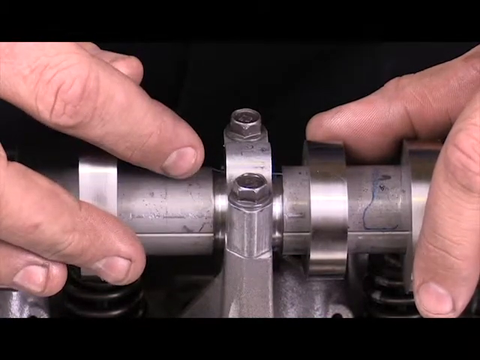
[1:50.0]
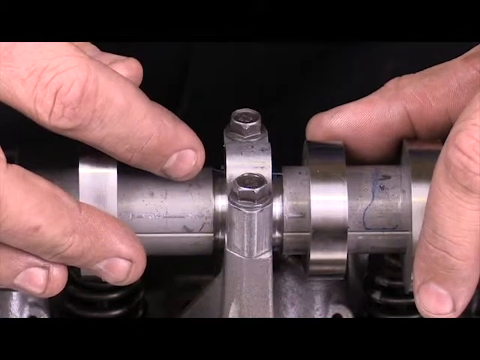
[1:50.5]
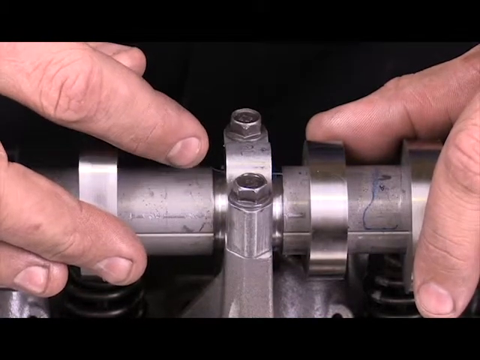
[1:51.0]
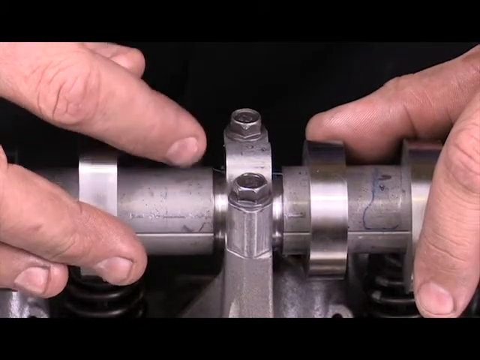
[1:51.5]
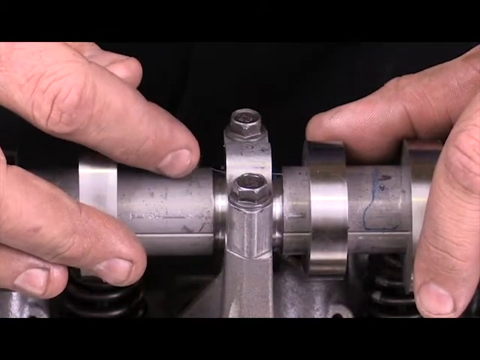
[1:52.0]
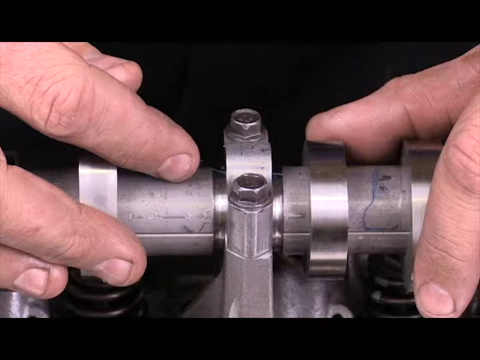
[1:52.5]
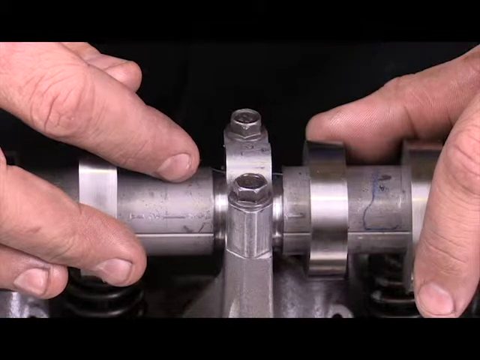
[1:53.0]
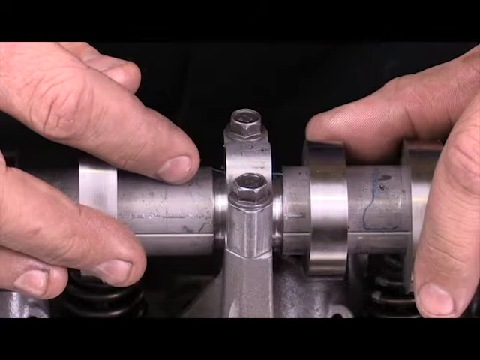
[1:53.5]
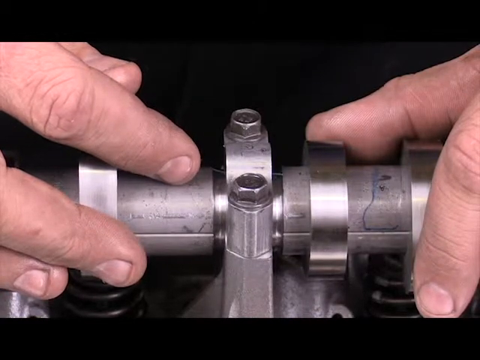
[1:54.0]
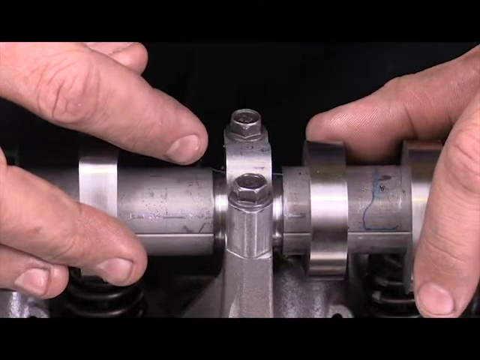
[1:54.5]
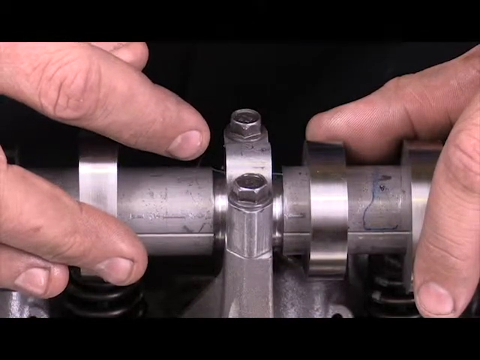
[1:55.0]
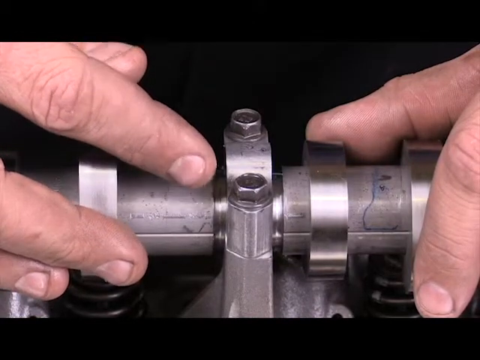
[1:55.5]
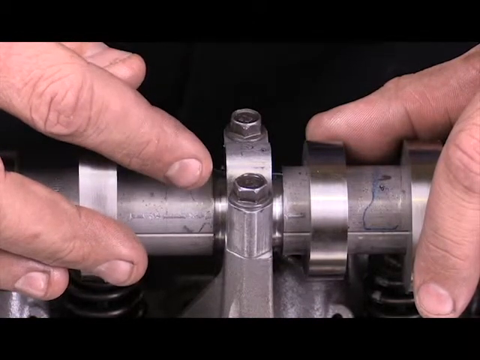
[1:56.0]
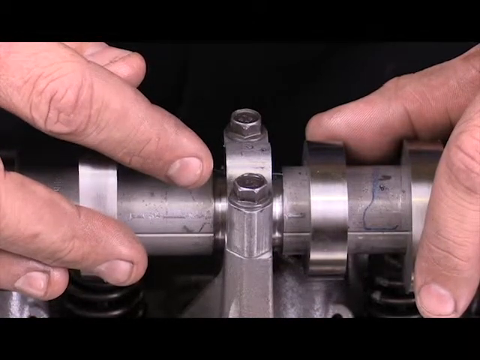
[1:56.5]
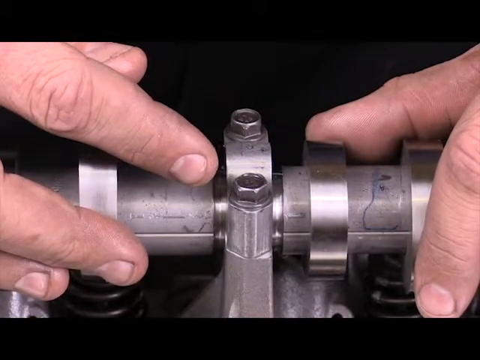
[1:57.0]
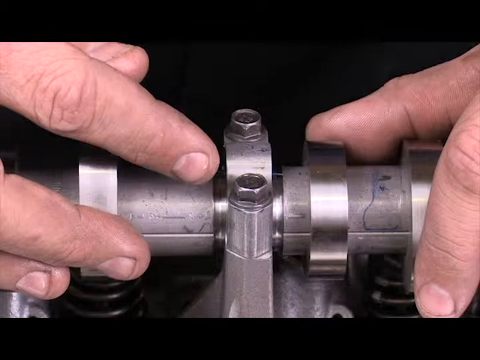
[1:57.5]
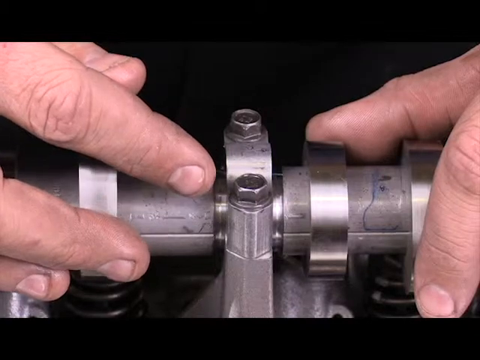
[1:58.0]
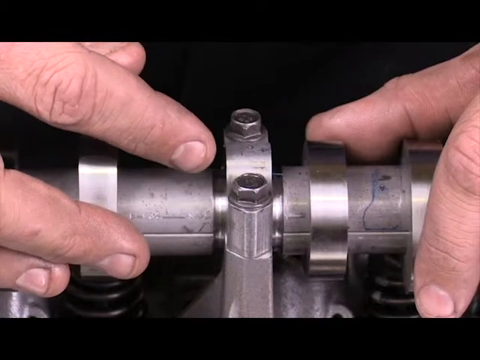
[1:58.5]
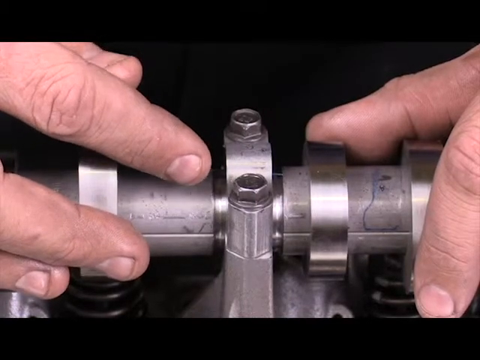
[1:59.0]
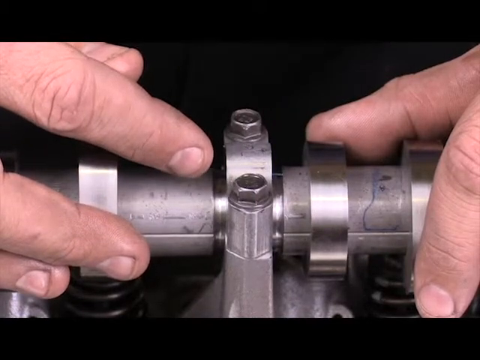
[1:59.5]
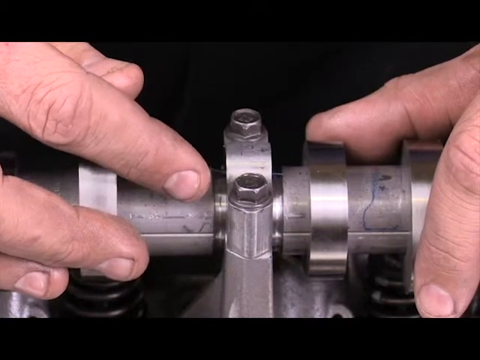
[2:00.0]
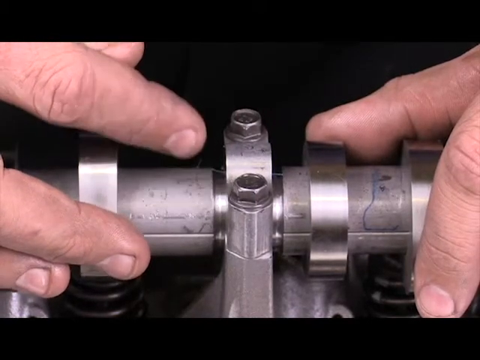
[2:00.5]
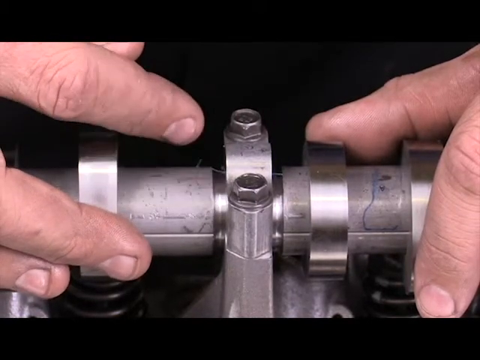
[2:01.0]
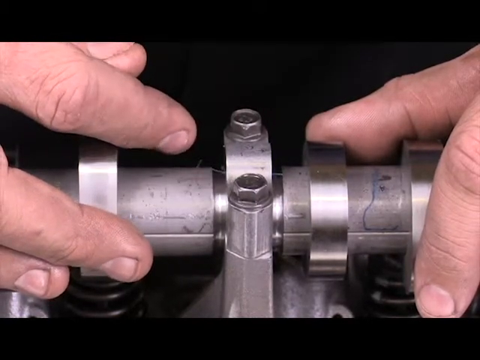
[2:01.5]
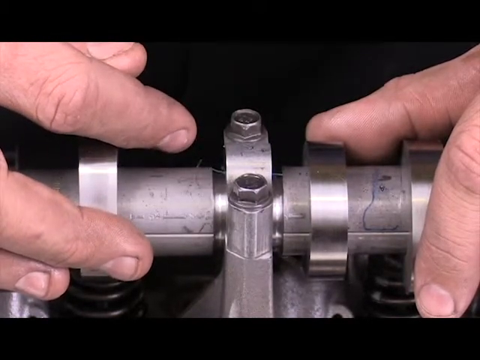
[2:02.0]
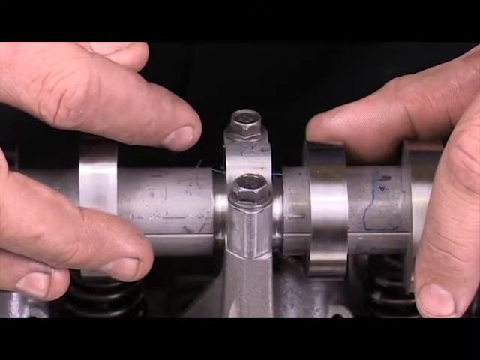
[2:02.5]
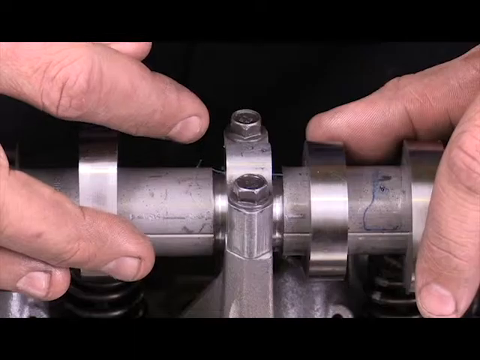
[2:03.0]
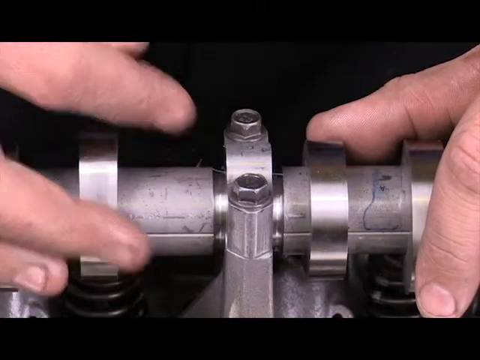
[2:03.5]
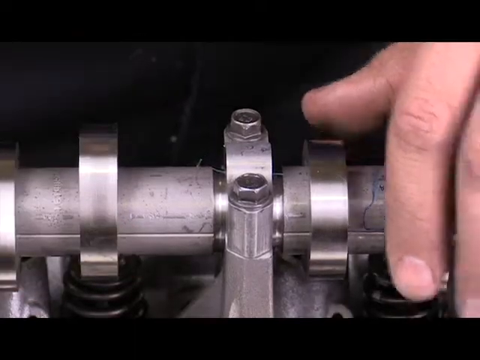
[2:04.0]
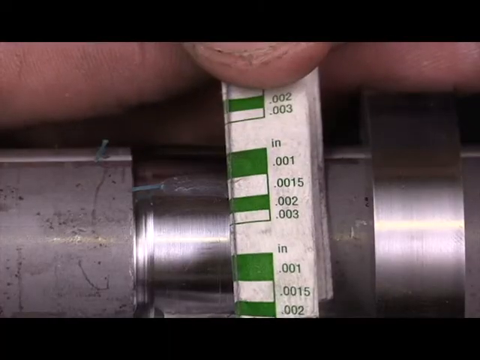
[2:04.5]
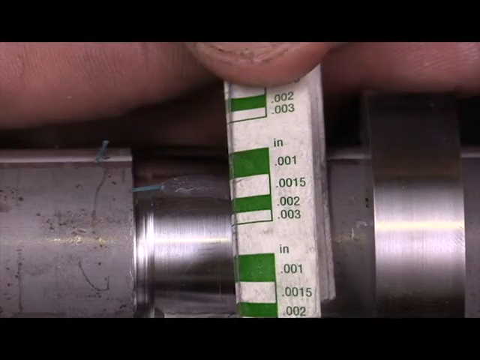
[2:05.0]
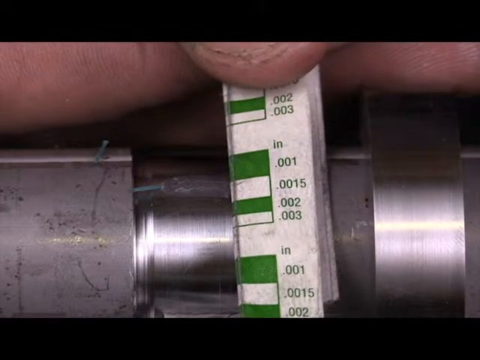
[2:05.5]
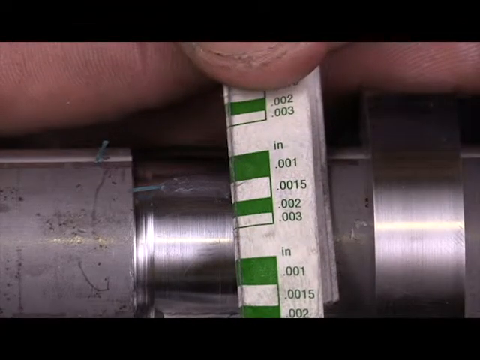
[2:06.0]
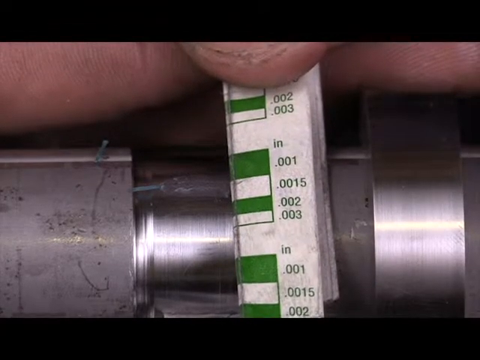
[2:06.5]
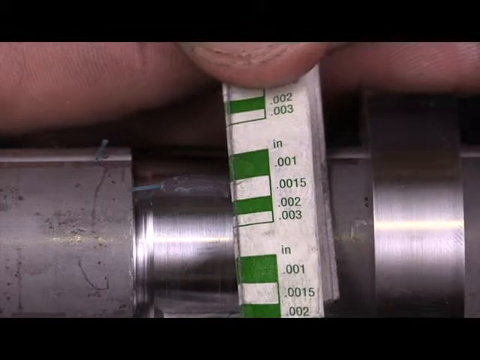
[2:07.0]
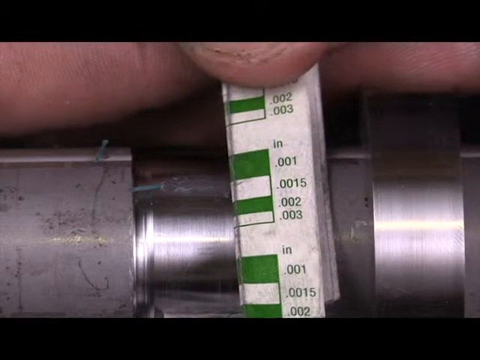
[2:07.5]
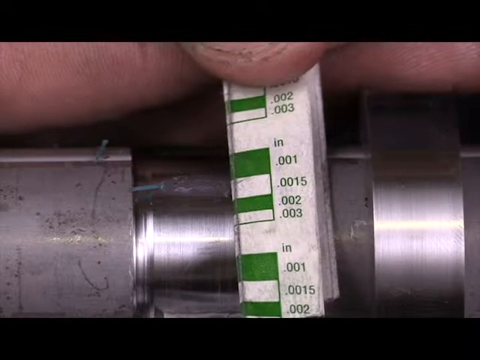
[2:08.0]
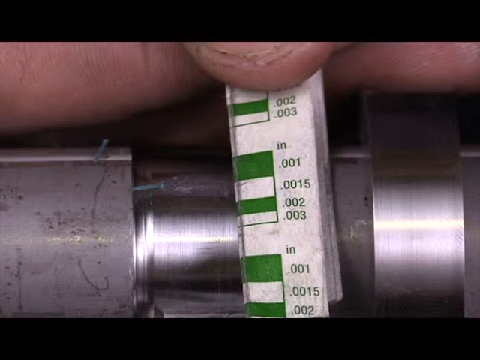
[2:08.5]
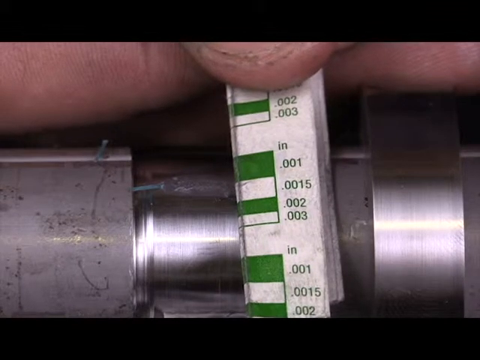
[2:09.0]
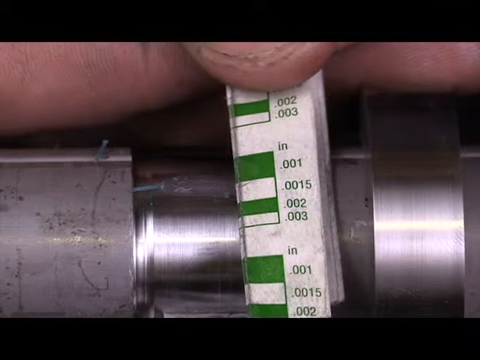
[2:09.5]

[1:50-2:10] The shot is very zoomed in on a cylinder-shaped metal piece and a pair of white male hands working on it, with little else in view. The left hand grasps one side of the cylinder, using primarily the forefinger and thumb, while on the other side the right hand kind of points with the index finger, lifting and lowering a few times, almost as though he were maybe talking about something on it. The video then cuts to a little green and white rectangular item held vertically that looks like a little measuring device. The camera is very zoomed in on it, showing very small print with fractional inches. He holds this piece up to the cylinder as though maybe trying to measure.